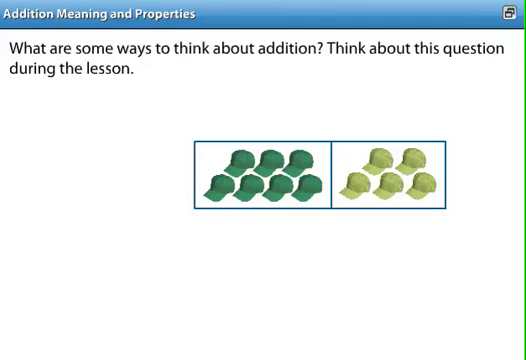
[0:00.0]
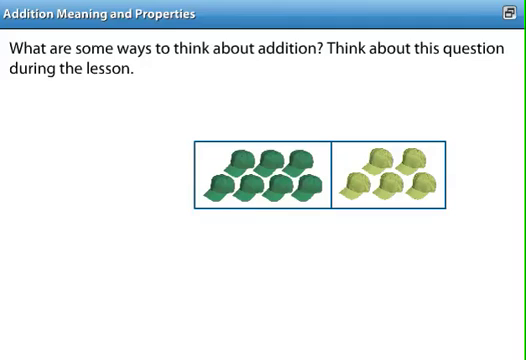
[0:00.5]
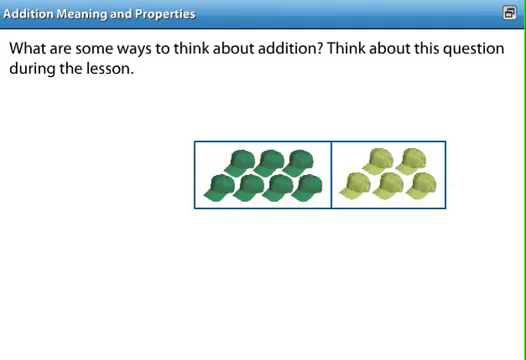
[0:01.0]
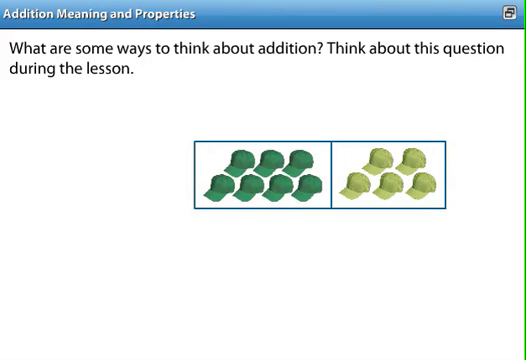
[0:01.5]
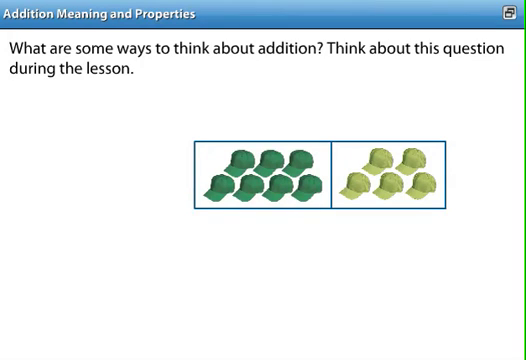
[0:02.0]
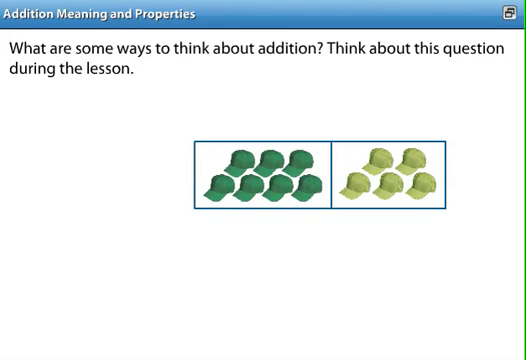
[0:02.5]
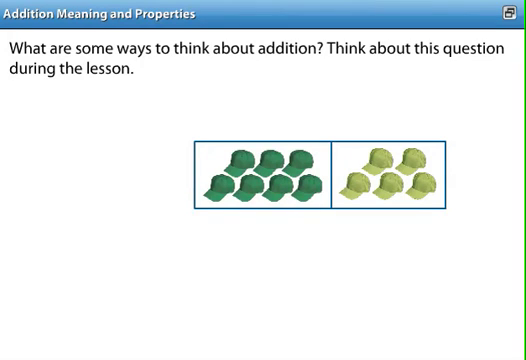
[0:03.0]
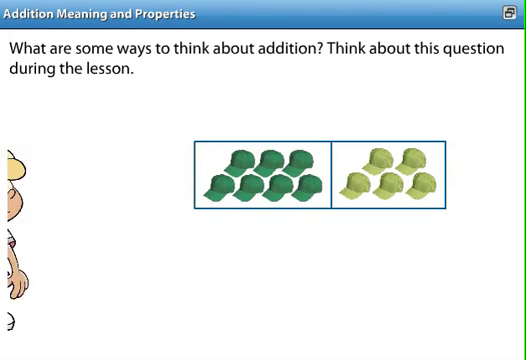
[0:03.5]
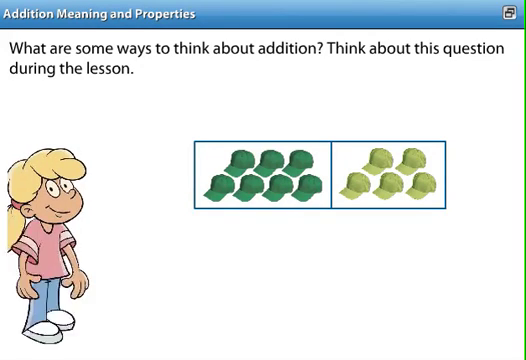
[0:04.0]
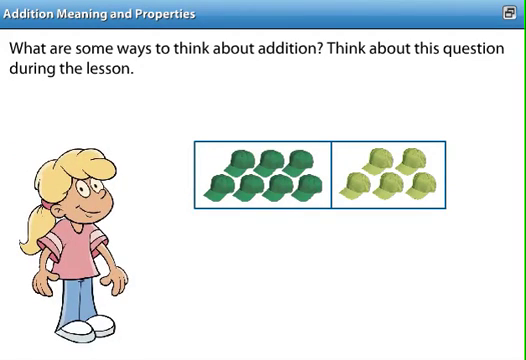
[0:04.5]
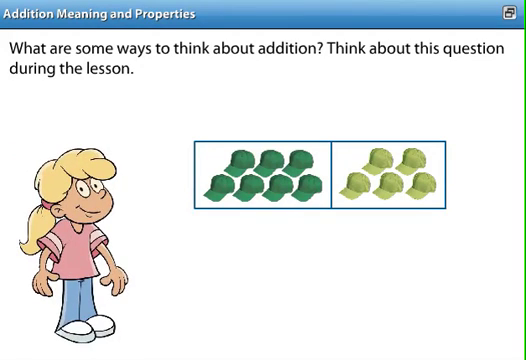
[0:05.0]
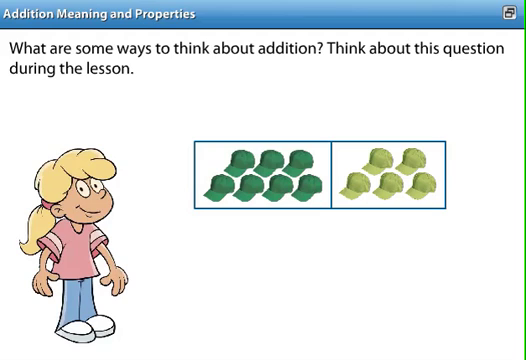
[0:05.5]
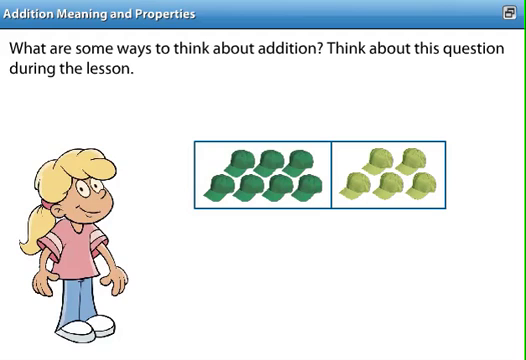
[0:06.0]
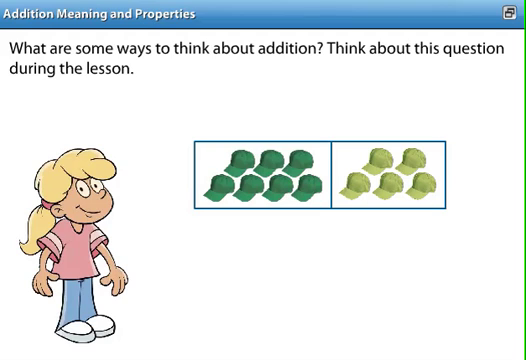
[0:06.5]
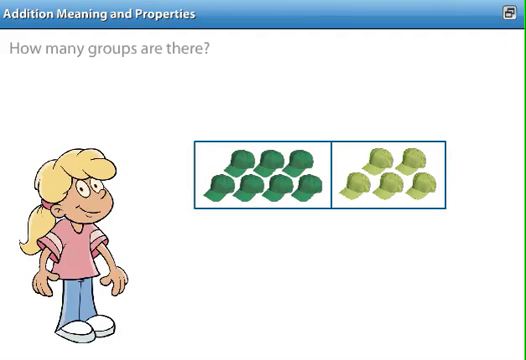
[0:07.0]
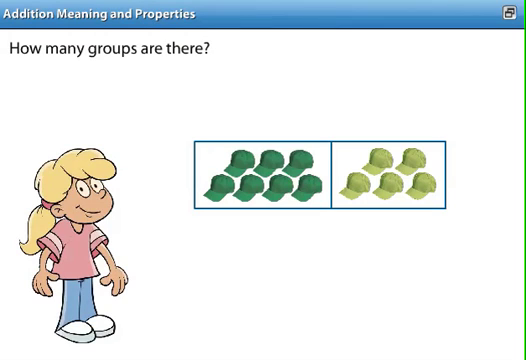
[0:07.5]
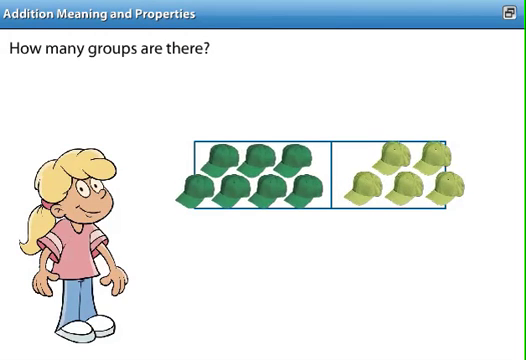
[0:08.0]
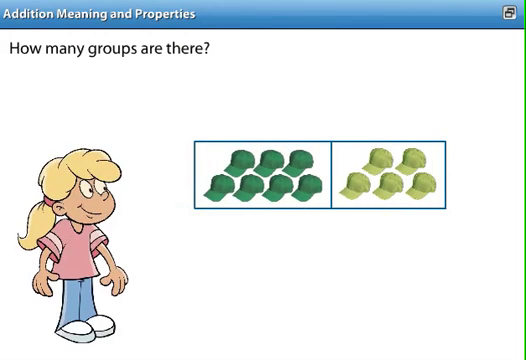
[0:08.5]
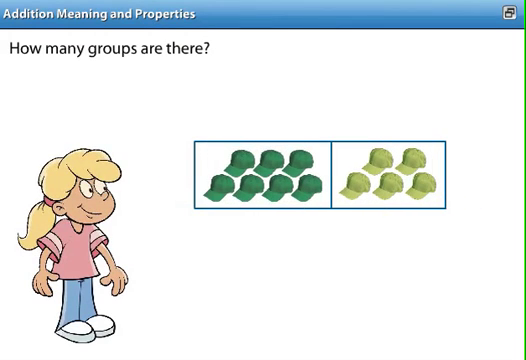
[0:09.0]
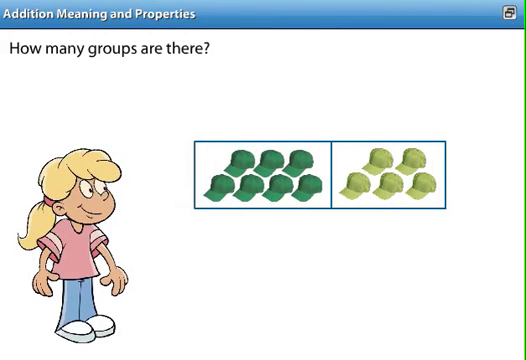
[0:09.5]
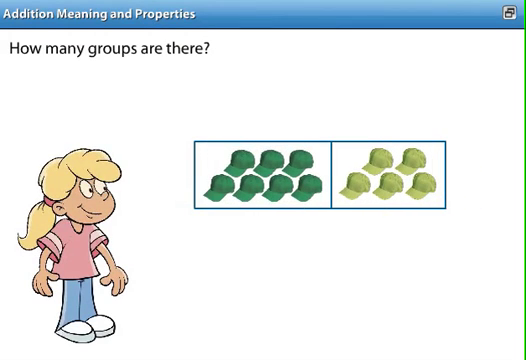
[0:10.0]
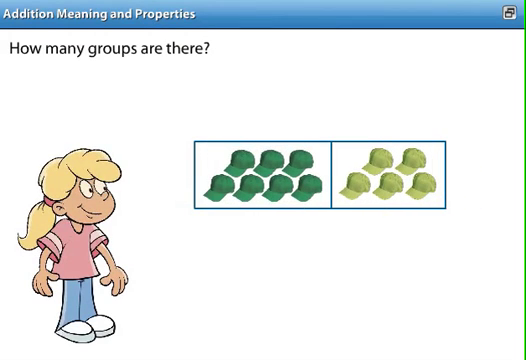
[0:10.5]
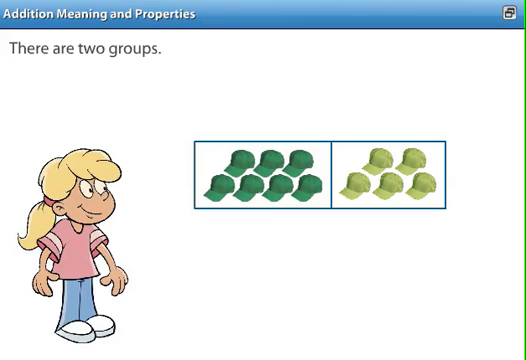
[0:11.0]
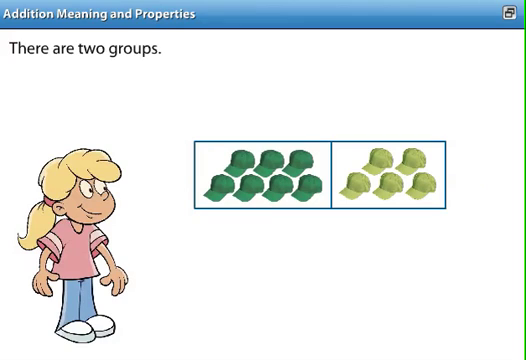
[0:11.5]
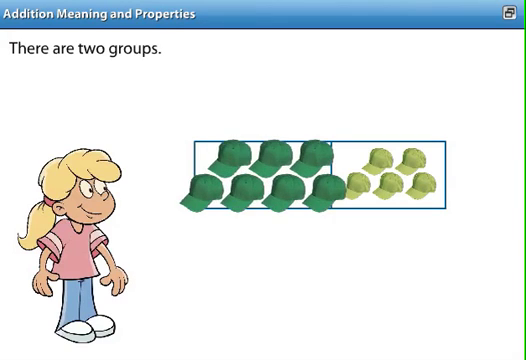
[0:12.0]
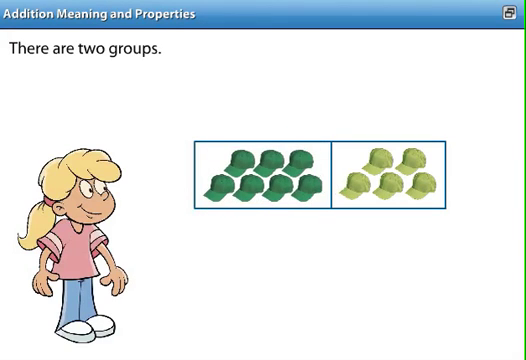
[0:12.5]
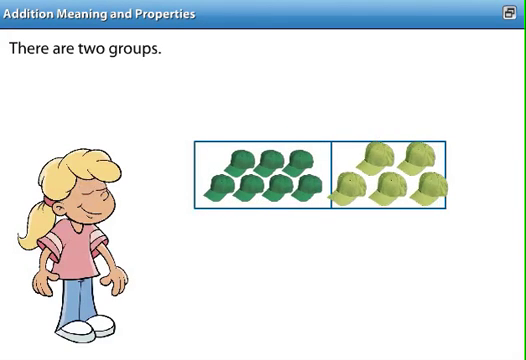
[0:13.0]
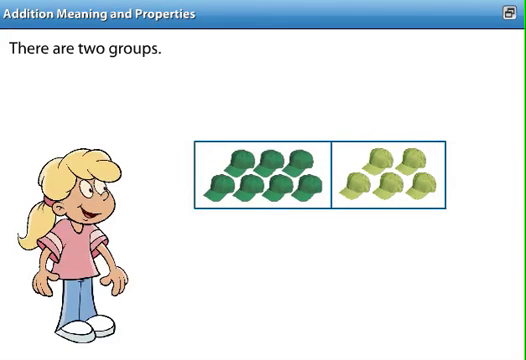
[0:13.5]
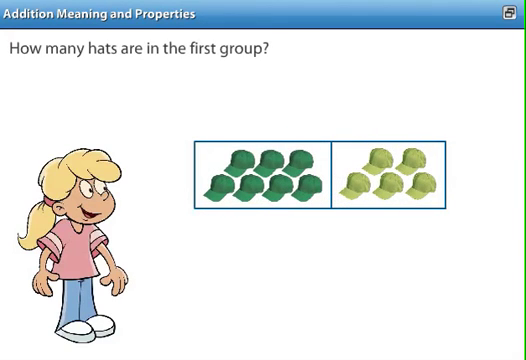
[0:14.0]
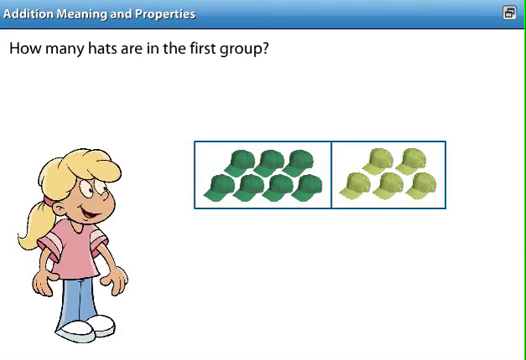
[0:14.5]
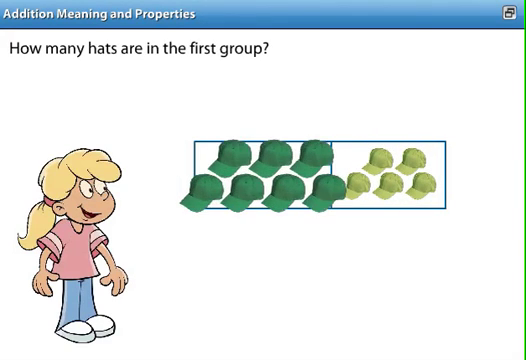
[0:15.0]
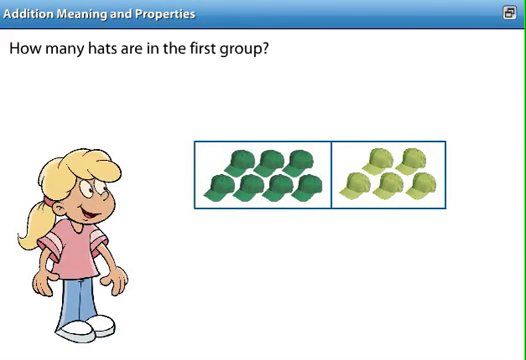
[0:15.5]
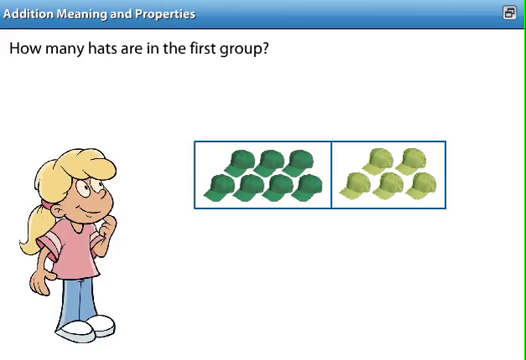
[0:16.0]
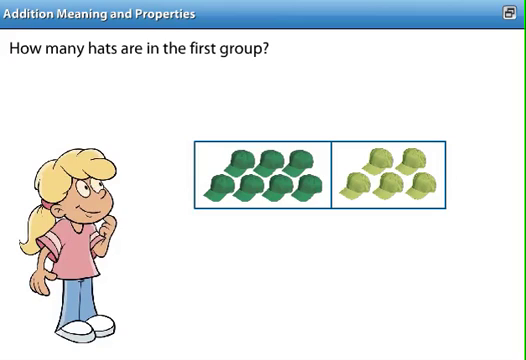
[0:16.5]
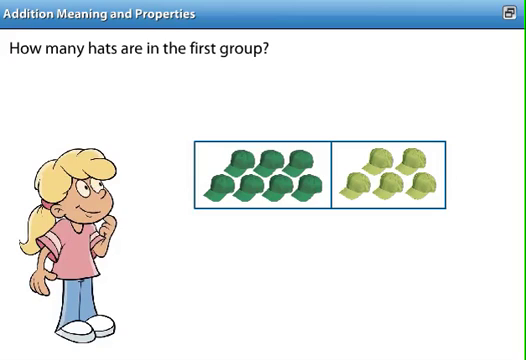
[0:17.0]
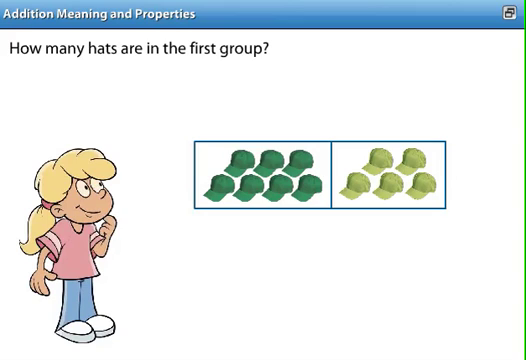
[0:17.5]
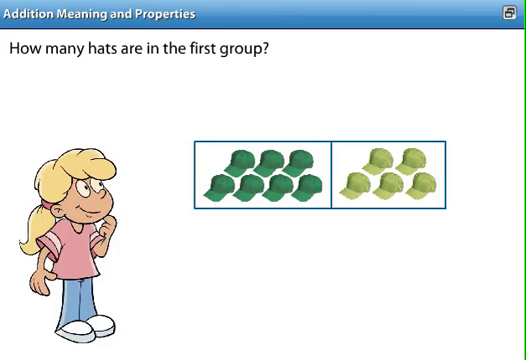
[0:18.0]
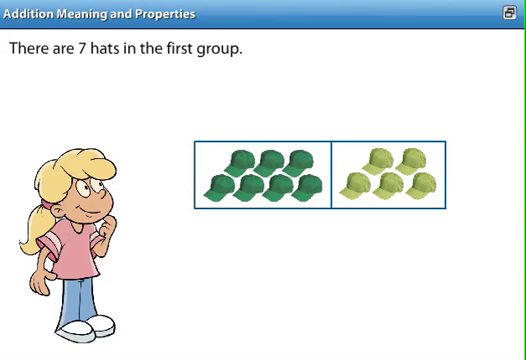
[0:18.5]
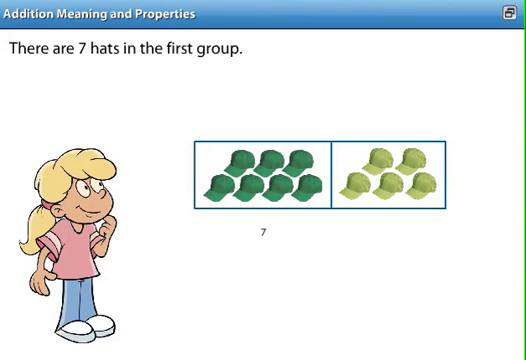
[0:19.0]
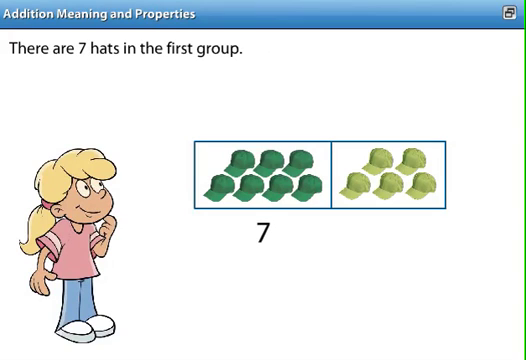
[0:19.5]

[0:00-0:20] The video opens on what appears to be a screen capture of an application window. The top bar reads "addition, meaning and properties." Against a white background, black text reads "what are some ways to think about addition. Think about this question during the lesson." Below the text are two rectangles side by side, each with a white background and containing what appear to be hats of different colors: the left box holds seven green hats and the right box holds five yellow hats. A cartoonish female figure walks into the window from the left edge of the screen. She is depicted with long white or yellow hair, a pink shirt, blue pants and sneakers, and she looks around. The question changes to "how many groups are there," and the hats pop out to attract attention. After a while the answer is given: there are two groups. The hats move around again and the question becomes "how many hats are in the first group." The figure appears to be thinking, with her hand on her chin. The answer is given that there are seven hats in the first group, and the number 7 appears underneath the left rectangle with the seven green hats inside.